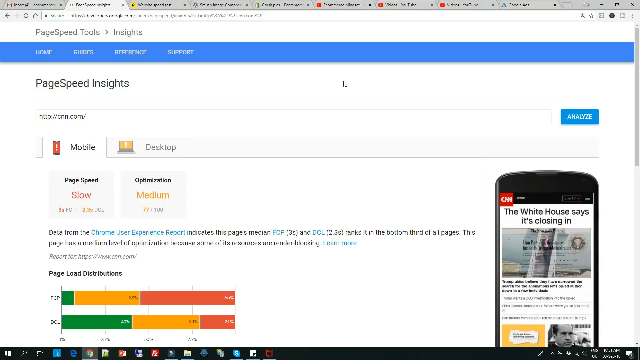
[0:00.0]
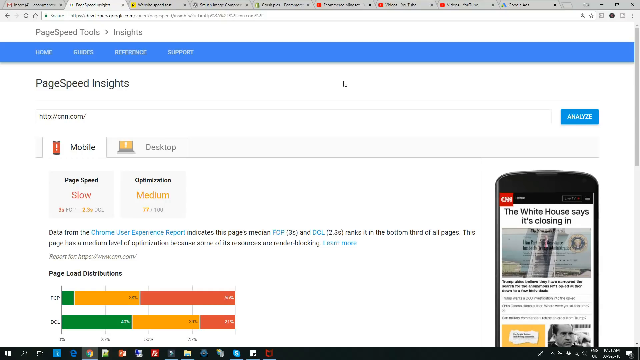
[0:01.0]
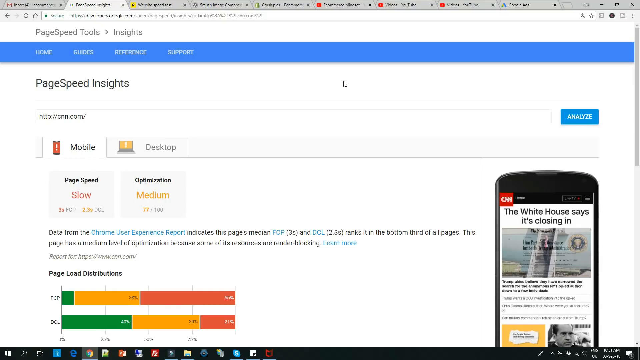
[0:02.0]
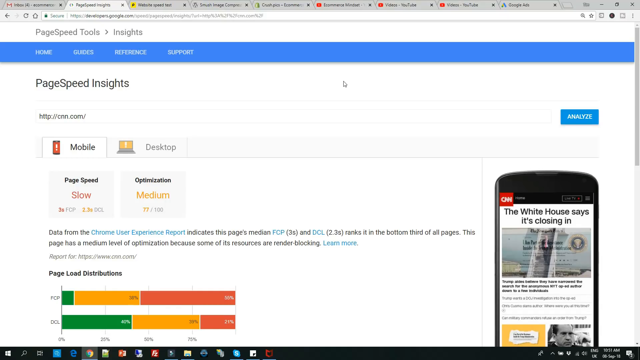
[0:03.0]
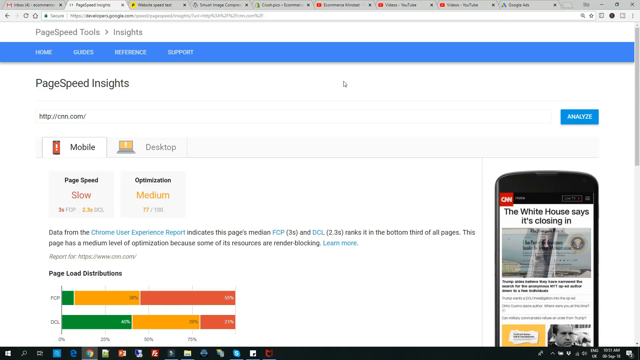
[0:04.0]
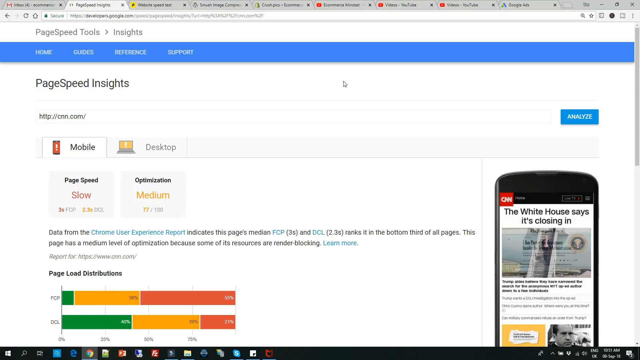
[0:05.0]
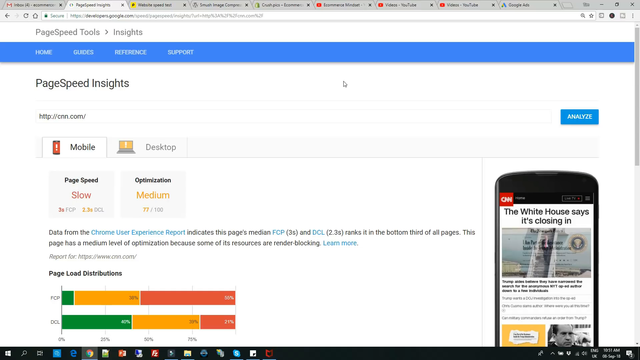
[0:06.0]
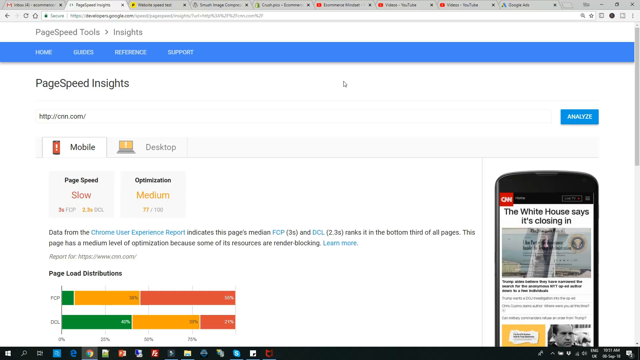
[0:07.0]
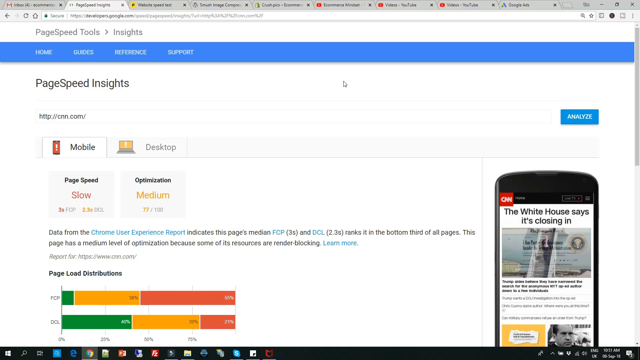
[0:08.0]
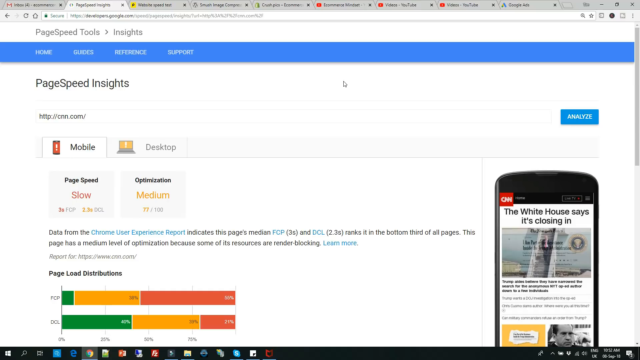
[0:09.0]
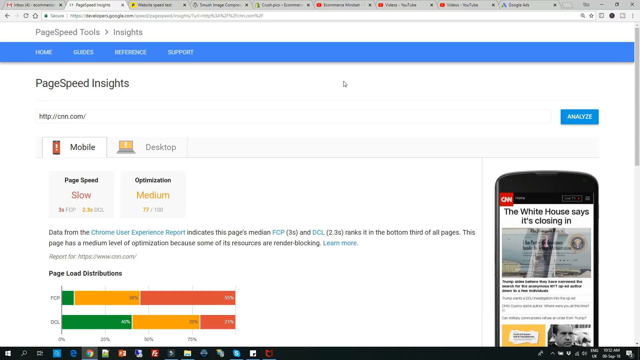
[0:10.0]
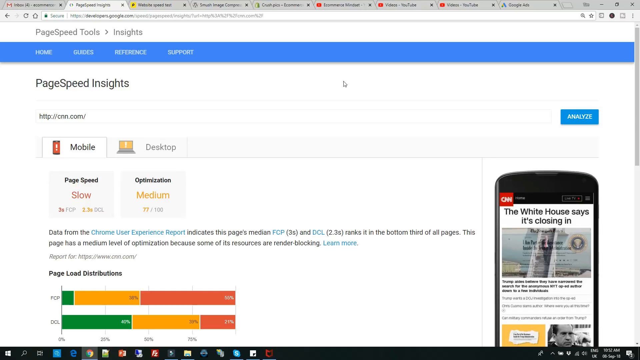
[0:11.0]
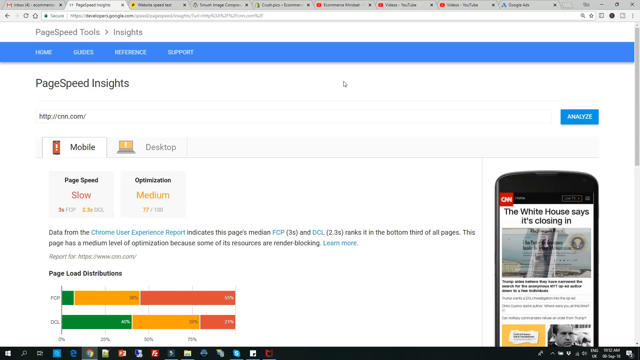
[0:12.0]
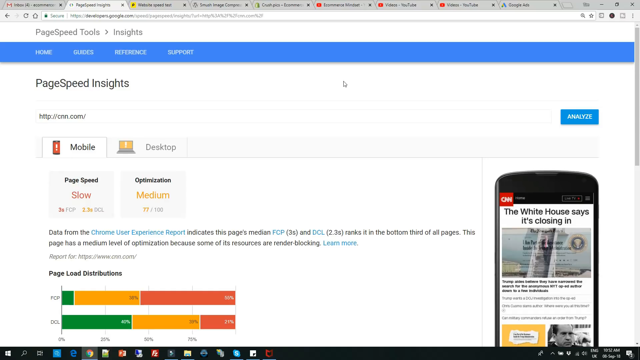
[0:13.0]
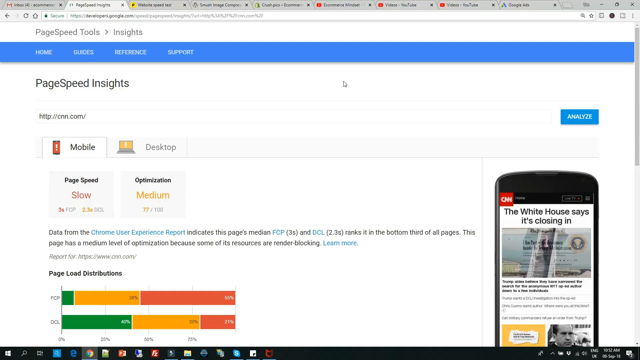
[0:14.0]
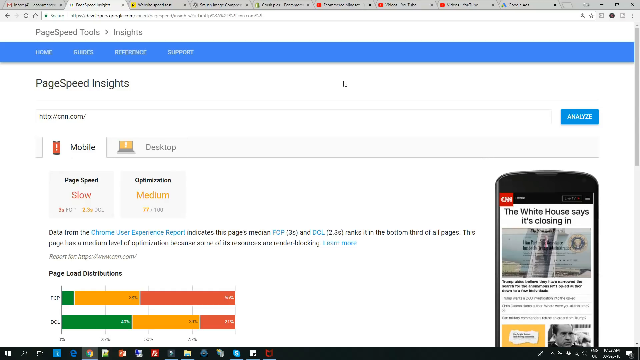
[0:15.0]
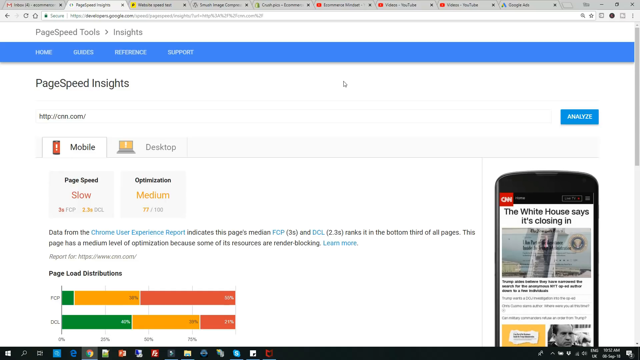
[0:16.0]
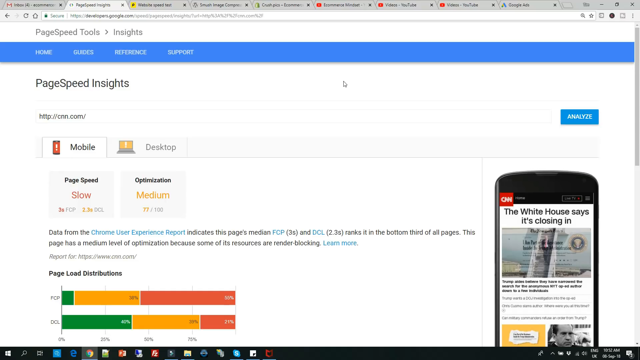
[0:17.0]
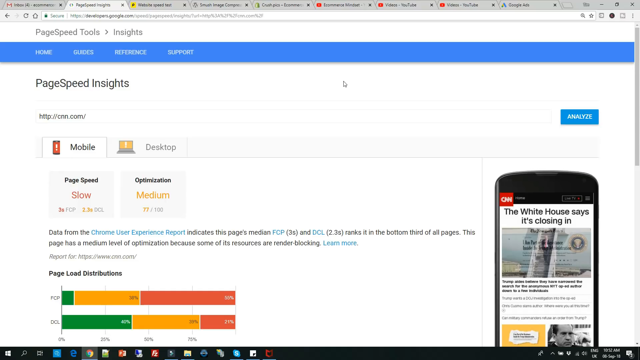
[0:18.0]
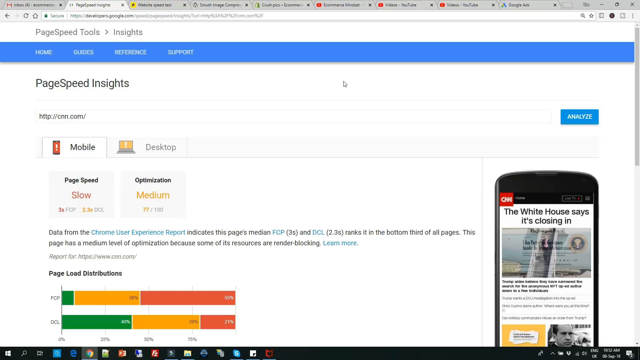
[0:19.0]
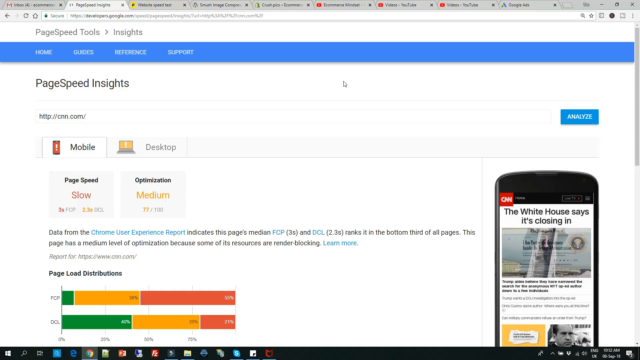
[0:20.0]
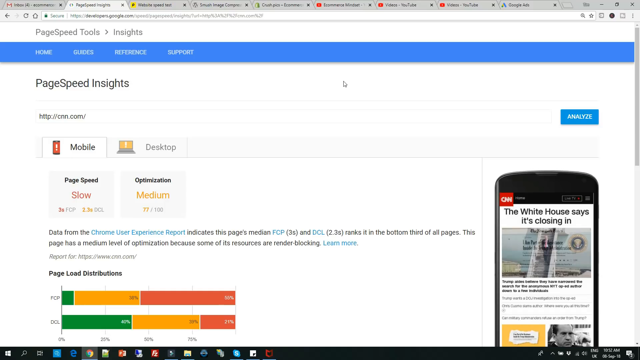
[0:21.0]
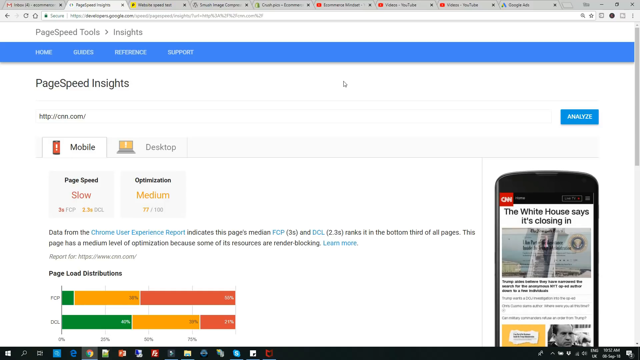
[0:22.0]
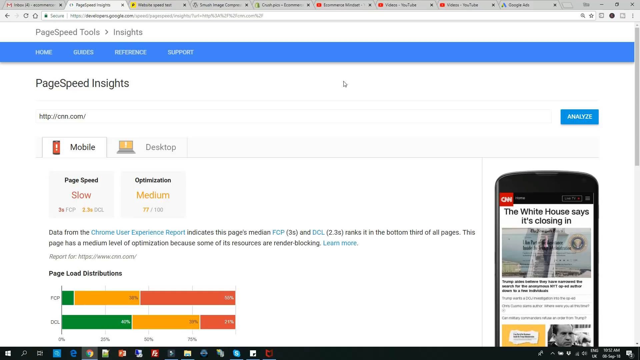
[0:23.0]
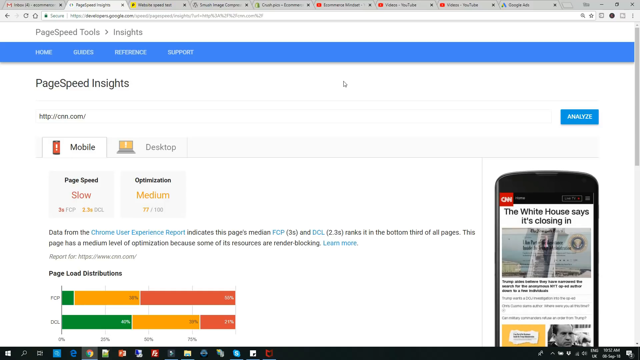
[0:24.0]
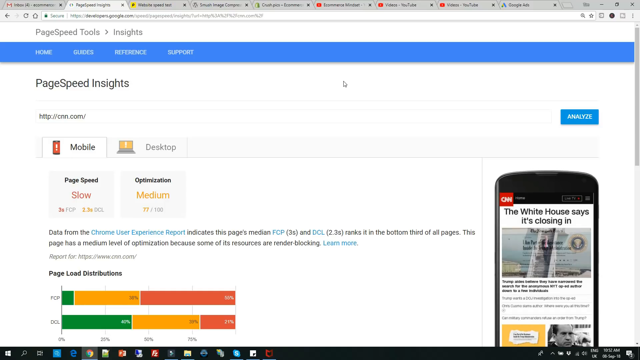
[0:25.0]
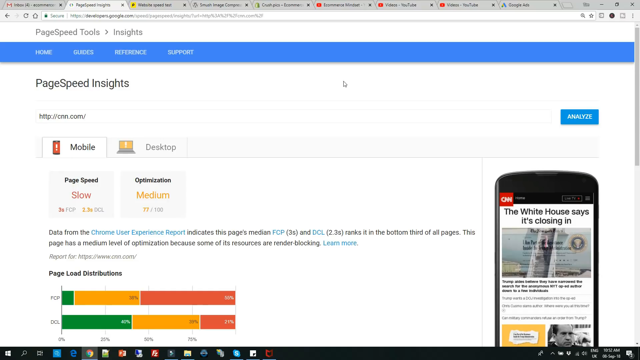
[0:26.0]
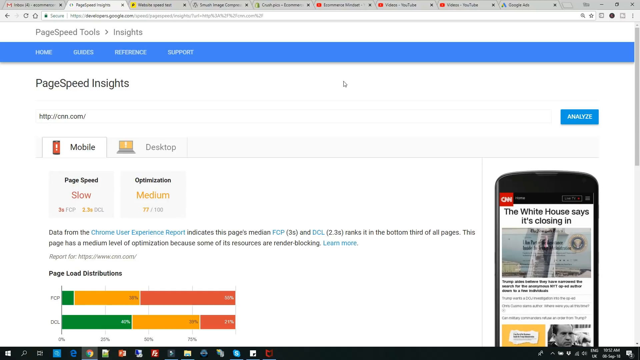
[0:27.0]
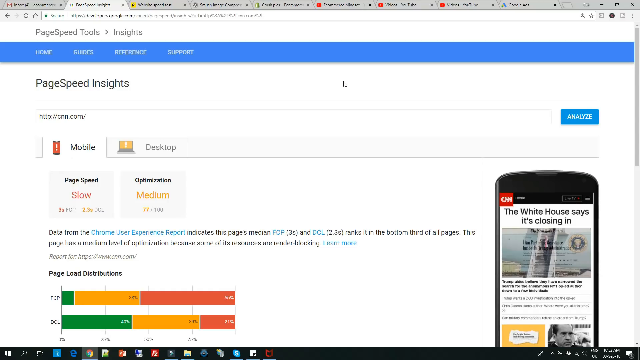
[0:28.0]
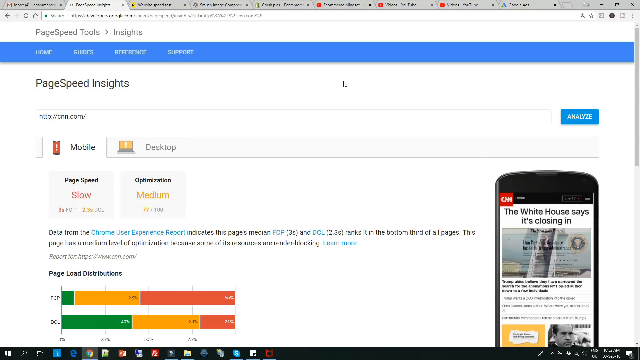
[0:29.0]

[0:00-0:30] A computer screen shows a webpage with about nine browser tabs open. The page reads "PageSpeed Insights" and "PageSpeed Tools", with options for "Mobile" and "Desktop". Under mobile it says "PageSpeed Slow" and "Optimization Medium", and there is a small cell phone image in the corner. Another line begins "the White House says it's closing in", but the rest cannot be read. A section titled "page load distributions" says "data from the Chrome user experience reports" and "This page has a medium level of optimization because some of the resources are renderer blocking." The page seems to show how fast a page loads.